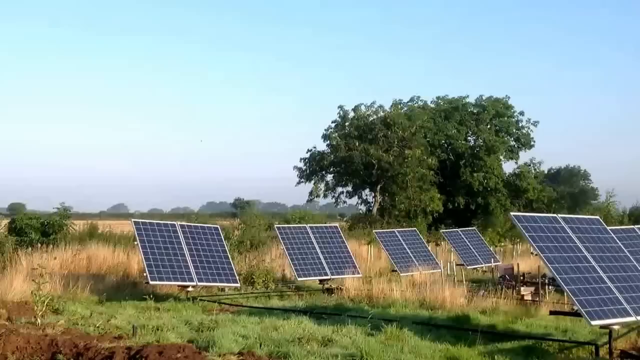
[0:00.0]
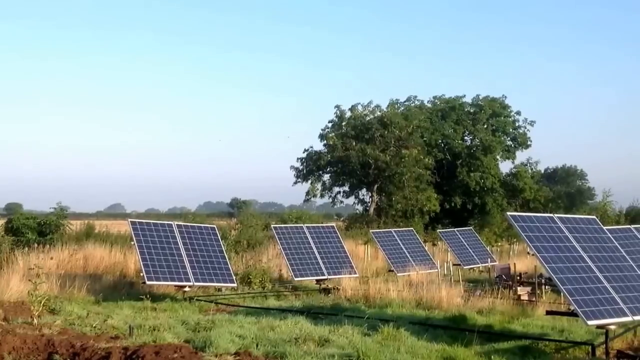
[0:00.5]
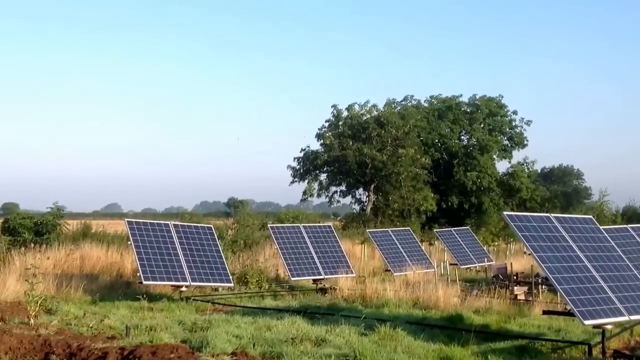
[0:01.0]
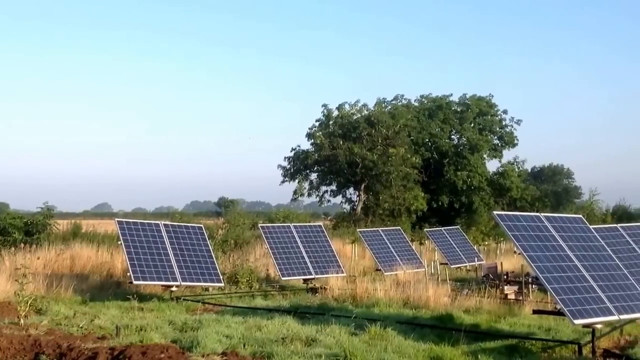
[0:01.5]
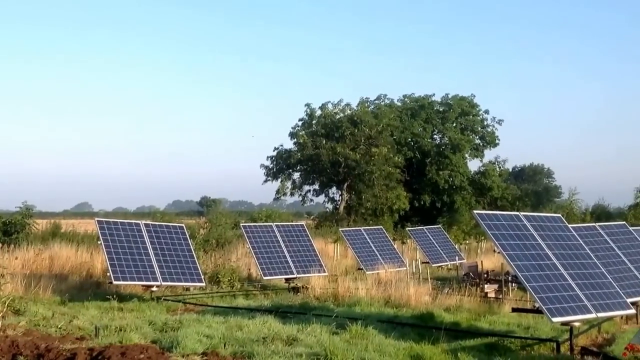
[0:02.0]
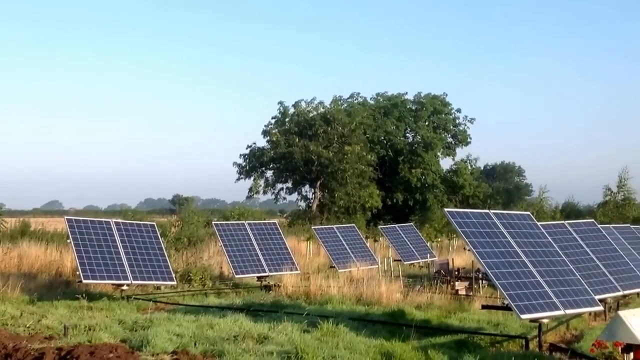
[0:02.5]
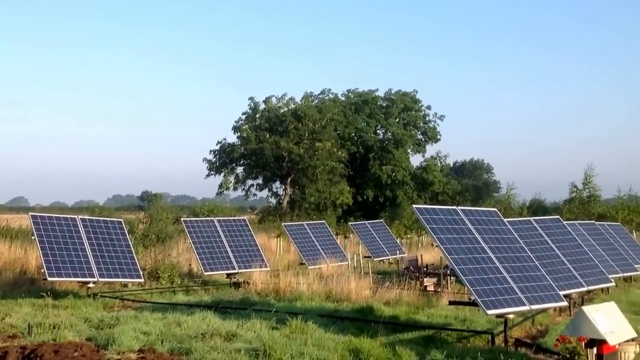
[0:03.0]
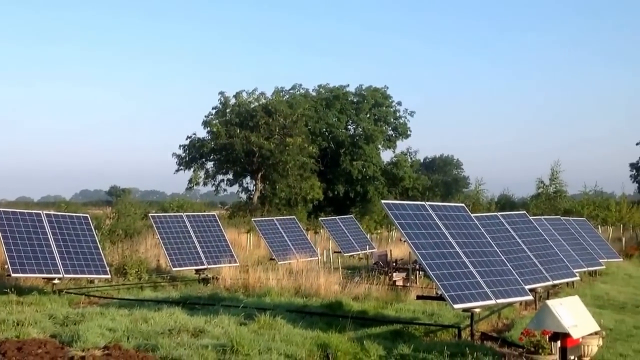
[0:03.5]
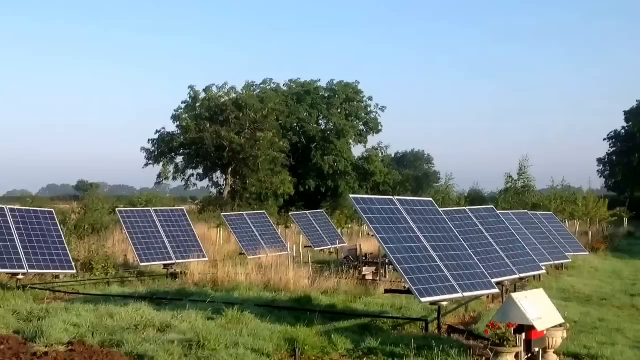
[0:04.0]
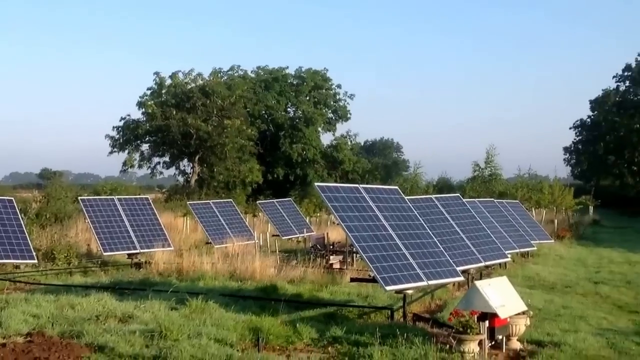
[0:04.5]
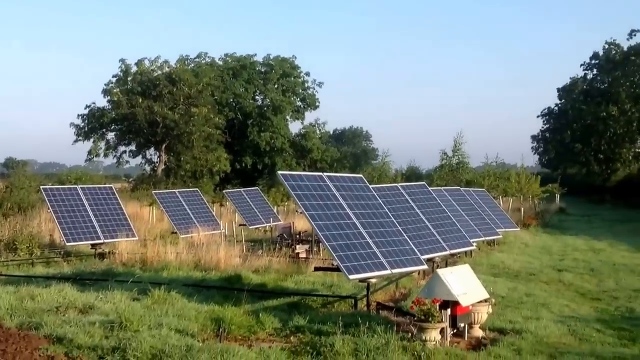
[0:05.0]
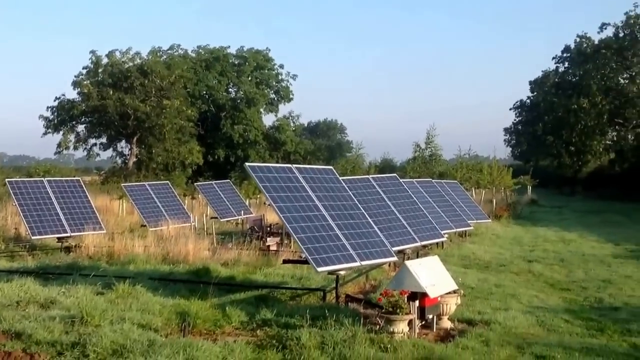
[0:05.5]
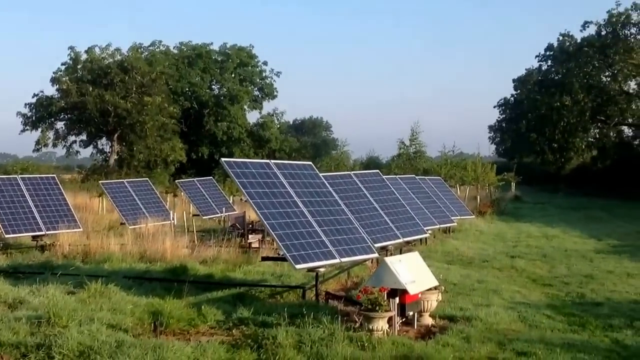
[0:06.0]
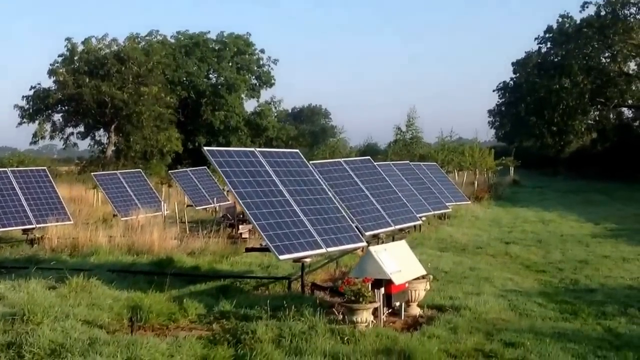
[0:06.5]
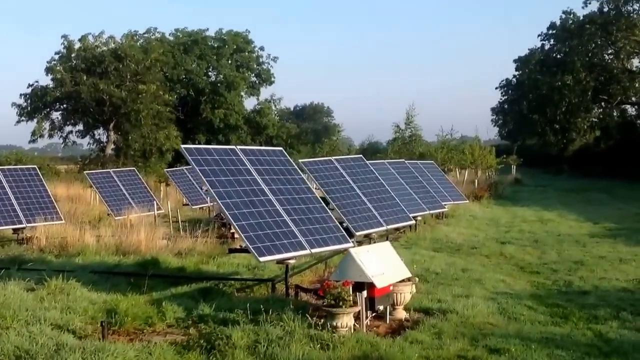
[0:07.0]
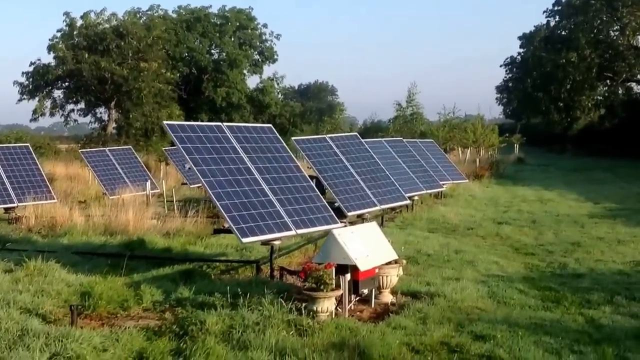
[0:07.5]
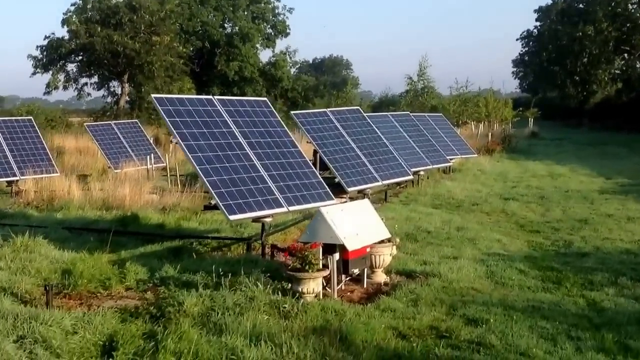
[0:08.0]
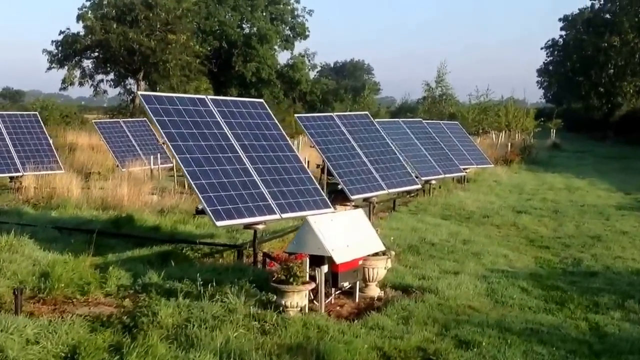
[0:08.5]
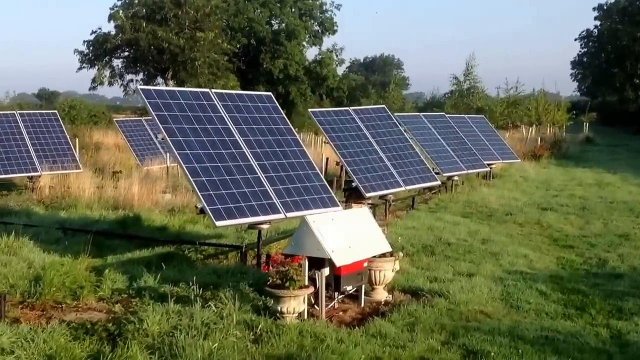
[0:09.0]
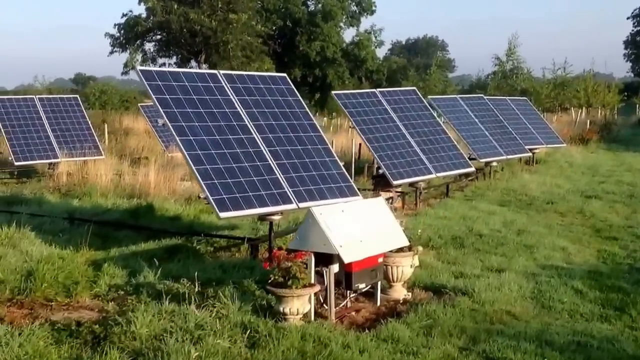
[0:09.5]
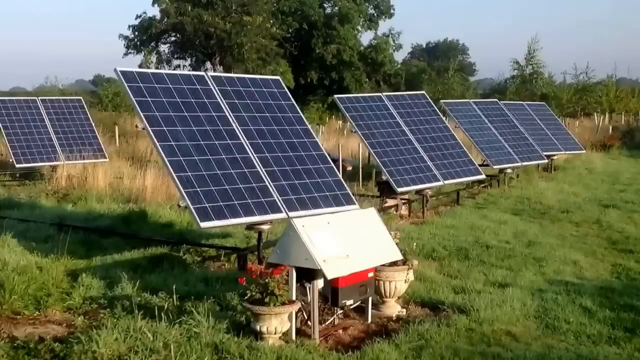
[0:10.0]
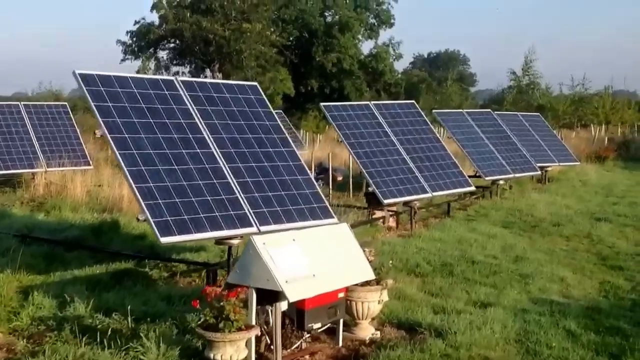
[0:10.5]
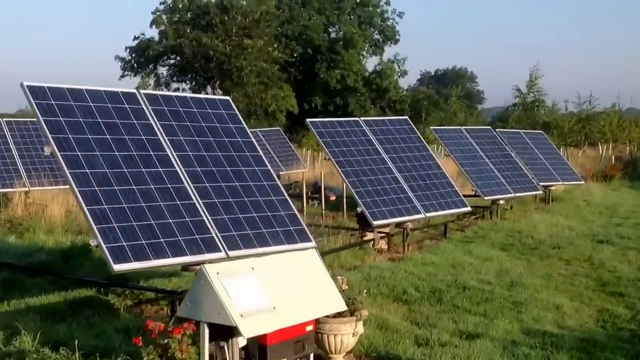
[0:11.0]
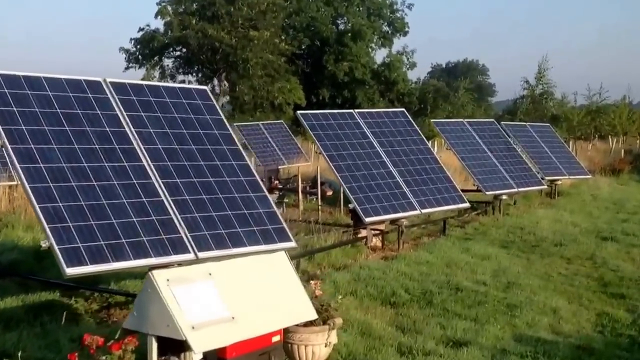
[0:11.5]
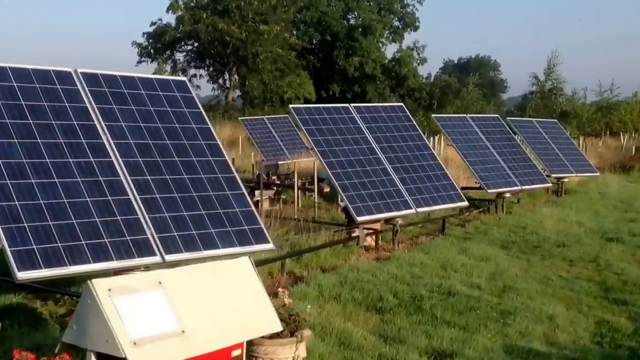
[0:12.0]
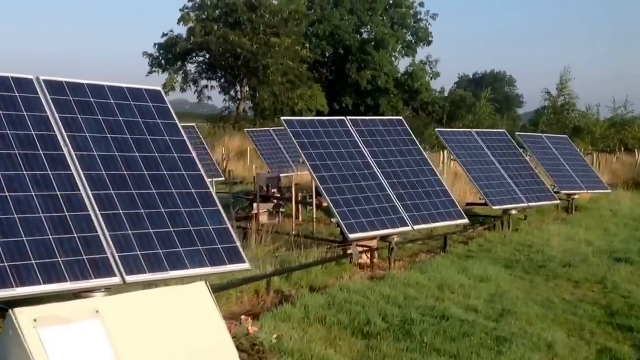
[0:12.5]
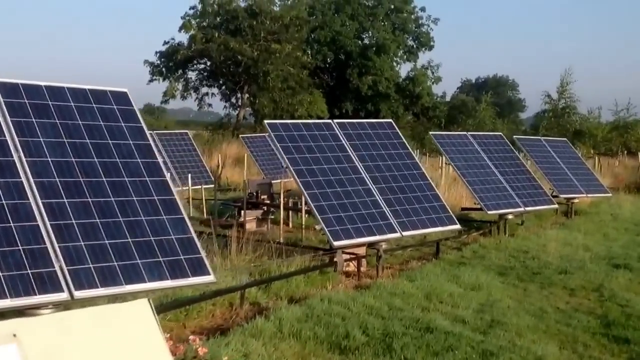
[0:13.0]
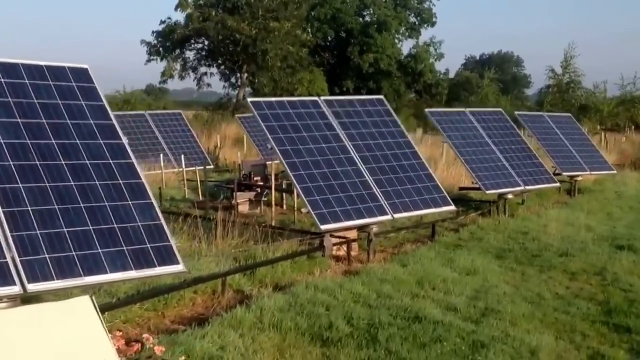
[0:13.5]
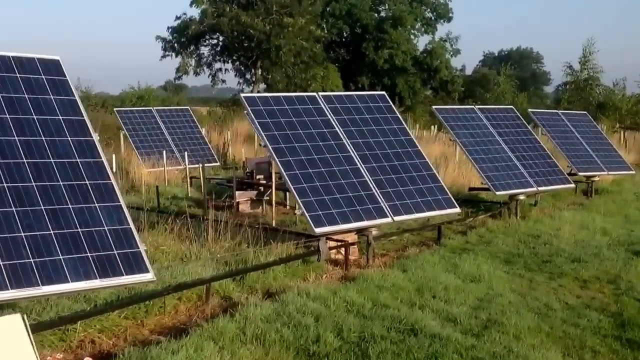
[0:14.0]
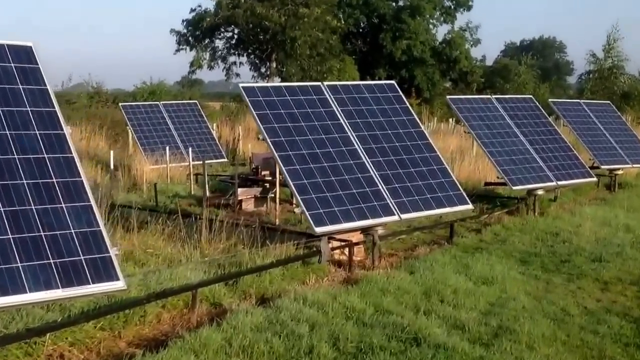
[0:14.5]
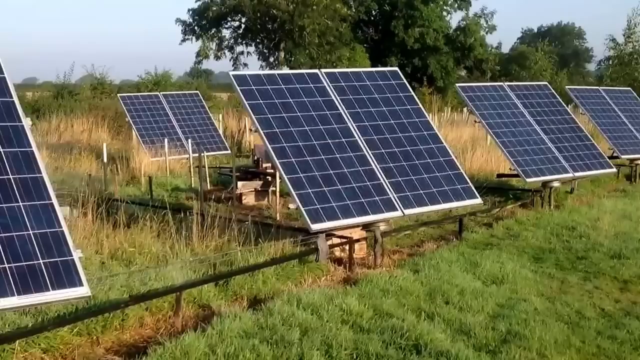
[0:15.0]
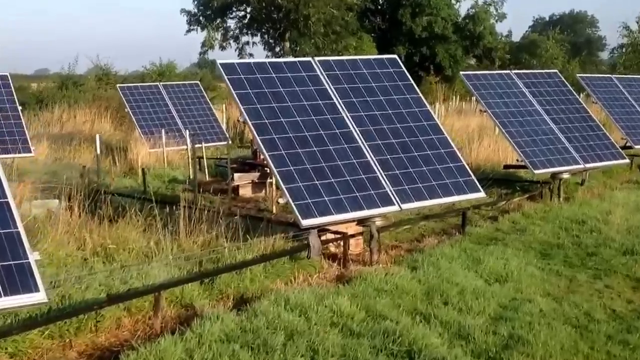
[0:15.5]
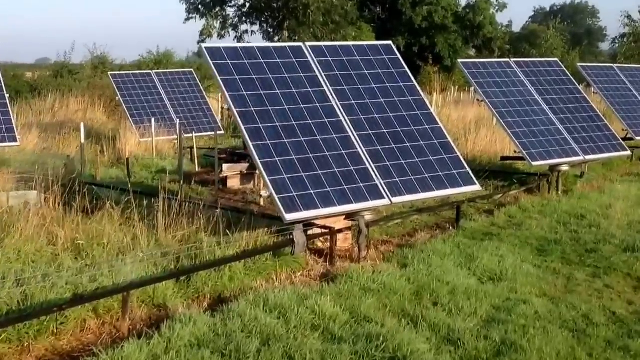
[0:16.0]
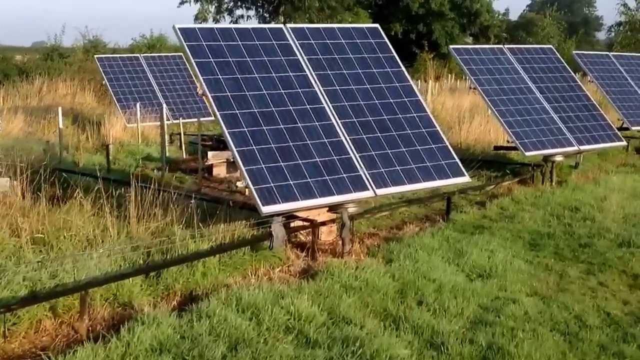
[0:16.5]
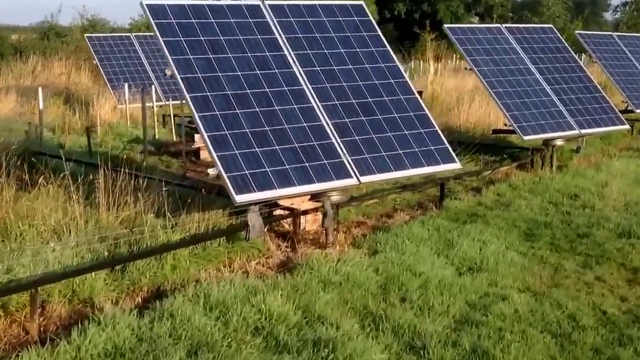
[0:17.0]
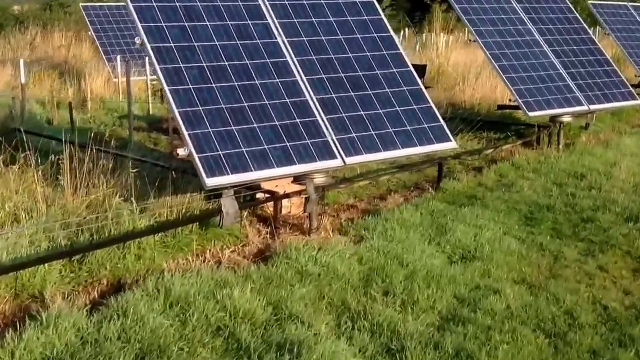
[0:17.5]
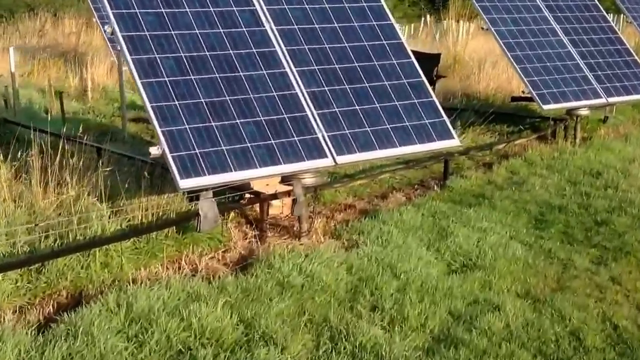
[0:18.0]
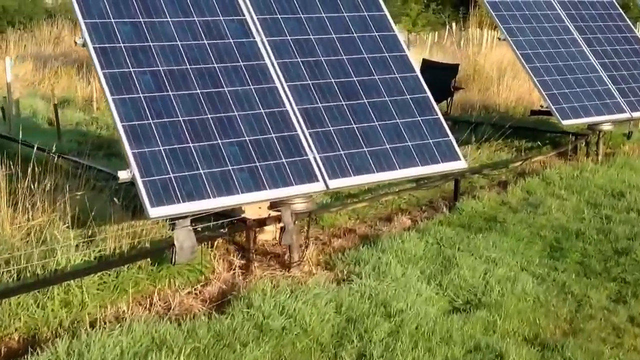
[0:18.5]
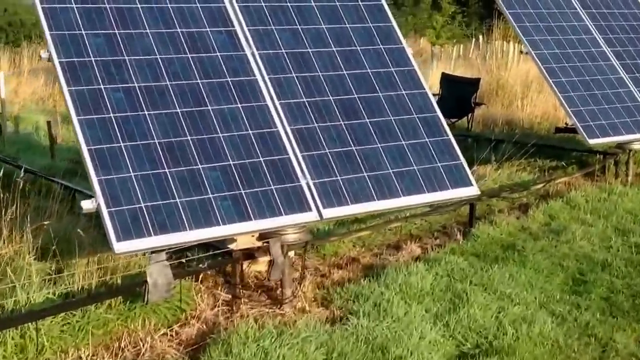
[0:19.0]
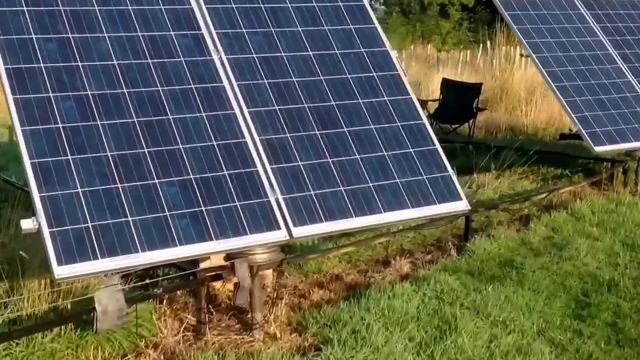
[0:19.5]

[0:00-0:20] An array of about eight solar panels stands on a grass clearing. The grass is quite tall: in the background there are brown, medium-length grasses, and in the foreground there is shorter, thicker-looking green grass. Trees are visible in the background, and the setting looks like a tropical or savannah environment. The camera pans from left to right, showing the solar panels in close-up. Behind them are a clear blue sky and many trees with dark green leaves, along with the tall brown grass. A foldable chair has been placed beside the solar panels in the back row. The panels are arranged in two rows with four solar panels in each row. Each solar panel has a left pane and a right pane, so they look just like windows with two window panes.